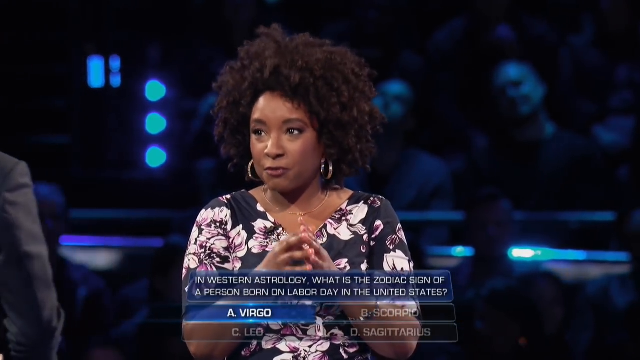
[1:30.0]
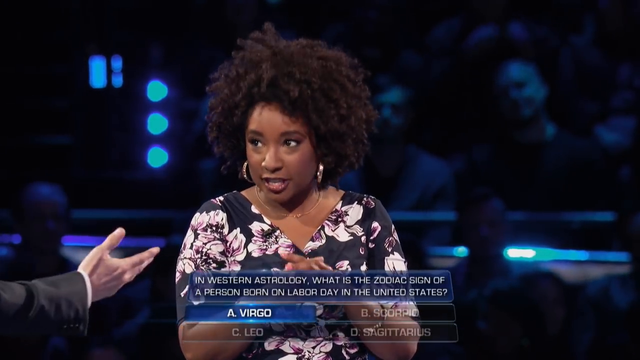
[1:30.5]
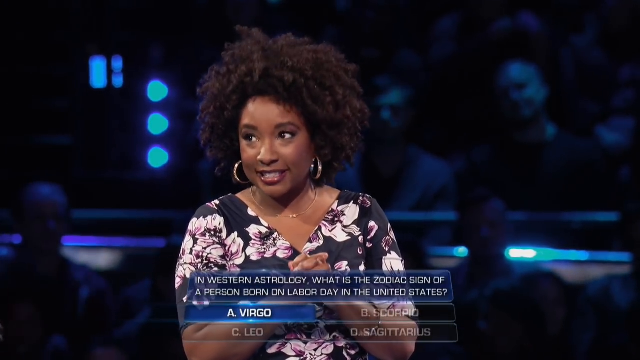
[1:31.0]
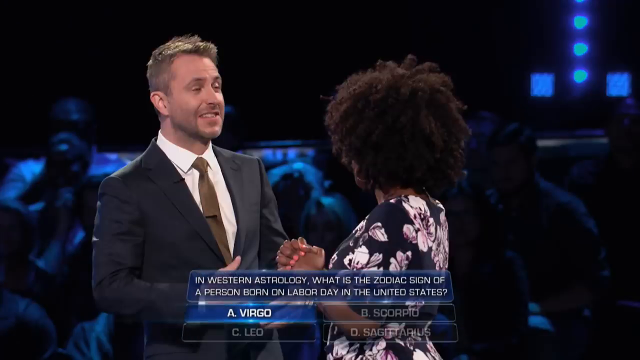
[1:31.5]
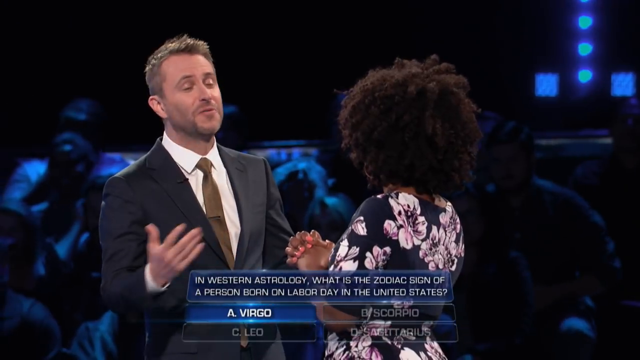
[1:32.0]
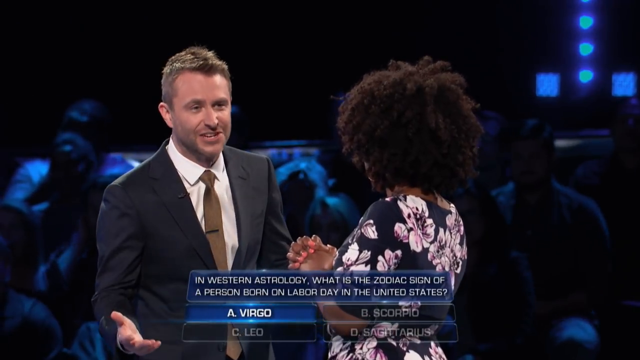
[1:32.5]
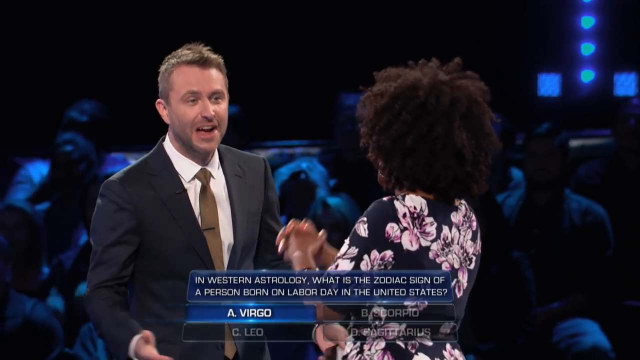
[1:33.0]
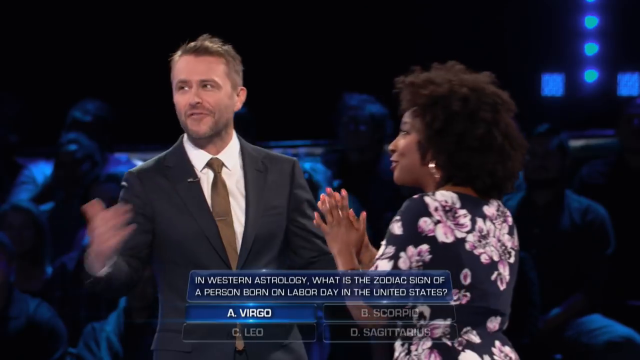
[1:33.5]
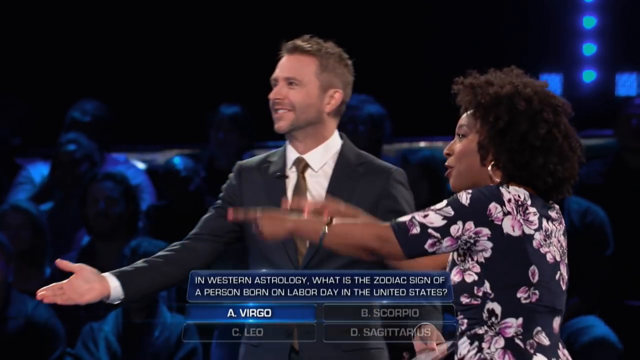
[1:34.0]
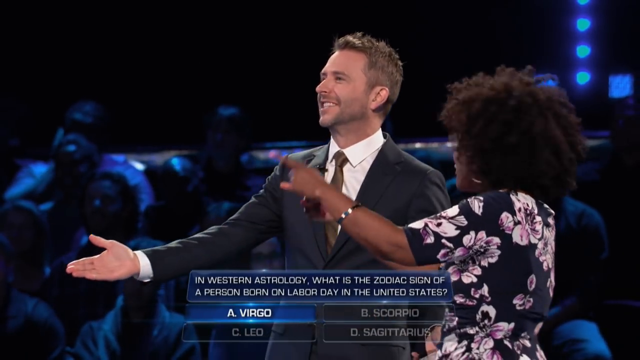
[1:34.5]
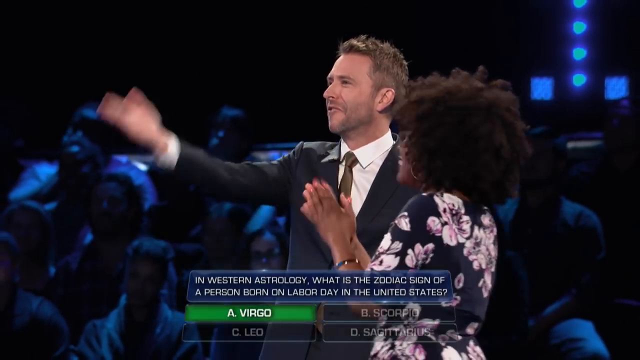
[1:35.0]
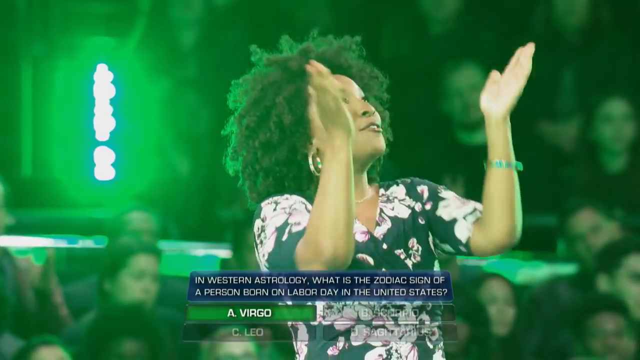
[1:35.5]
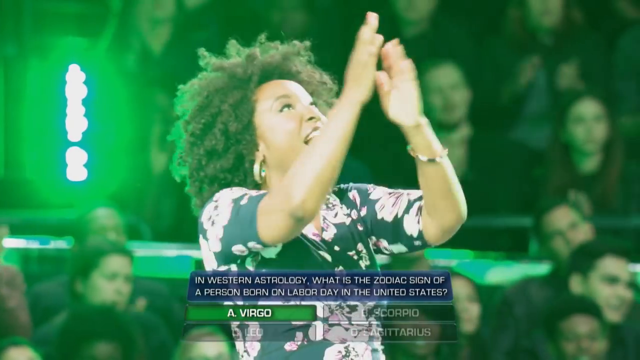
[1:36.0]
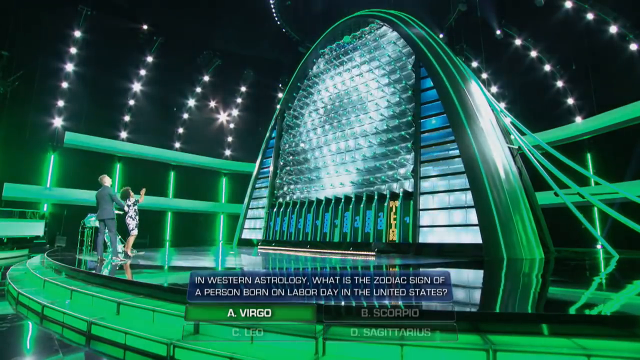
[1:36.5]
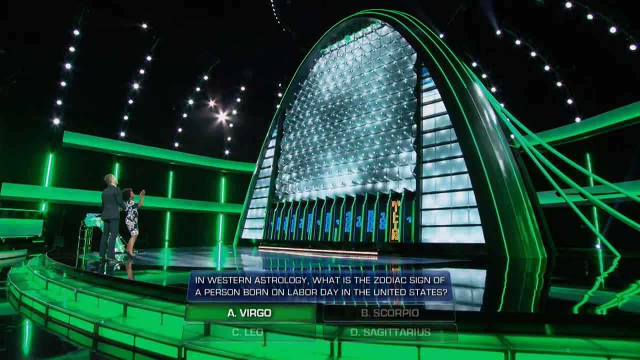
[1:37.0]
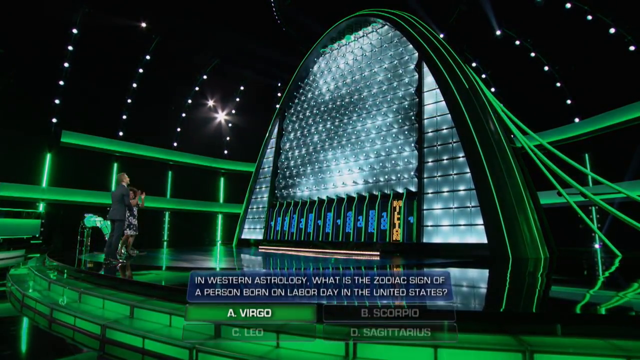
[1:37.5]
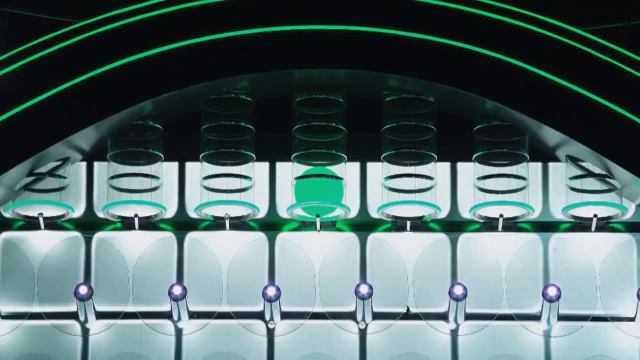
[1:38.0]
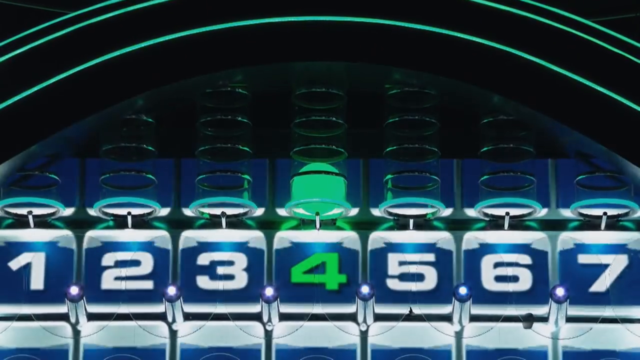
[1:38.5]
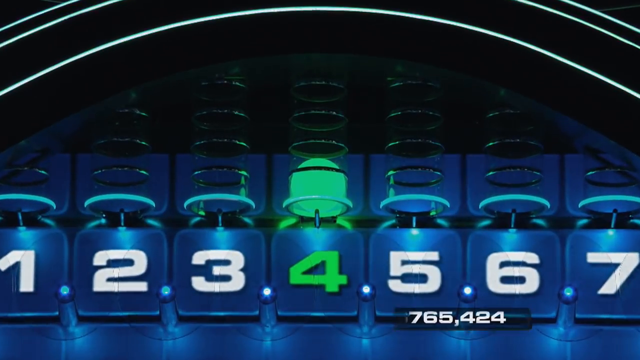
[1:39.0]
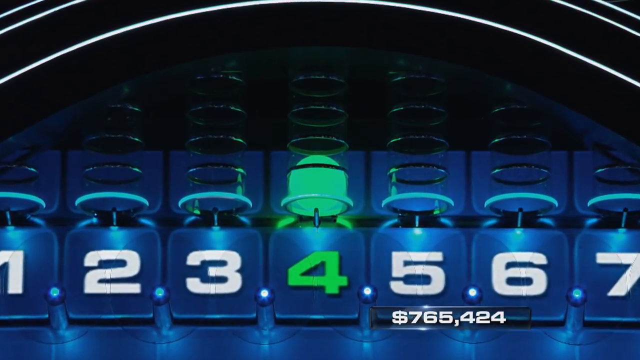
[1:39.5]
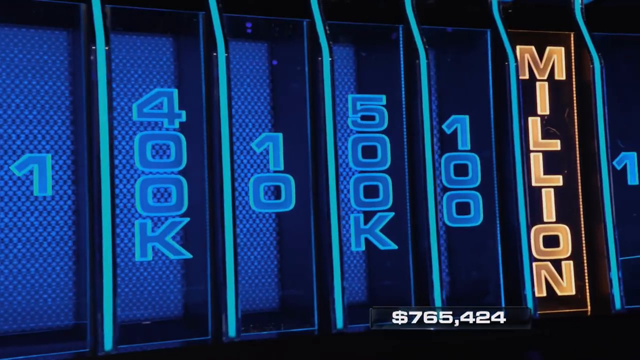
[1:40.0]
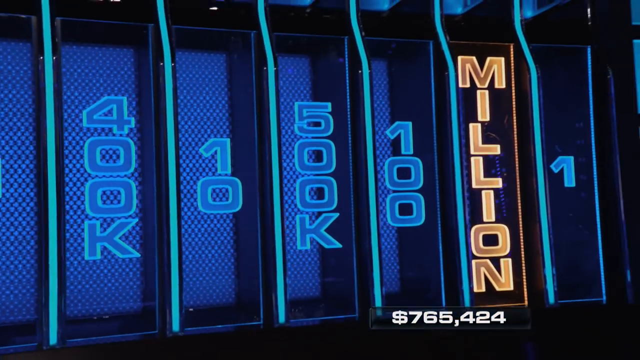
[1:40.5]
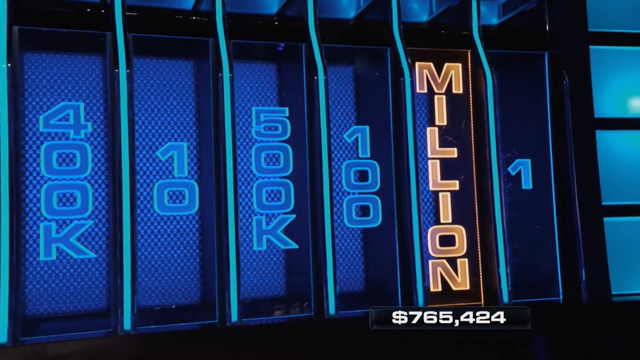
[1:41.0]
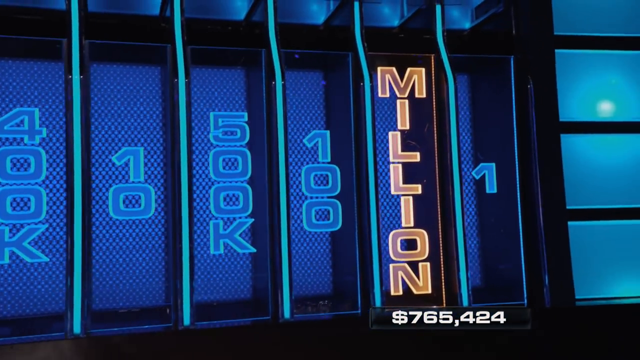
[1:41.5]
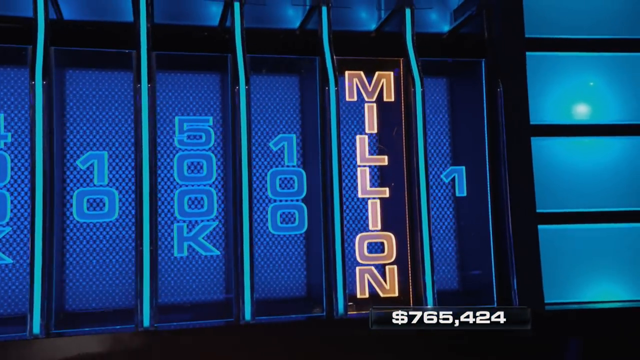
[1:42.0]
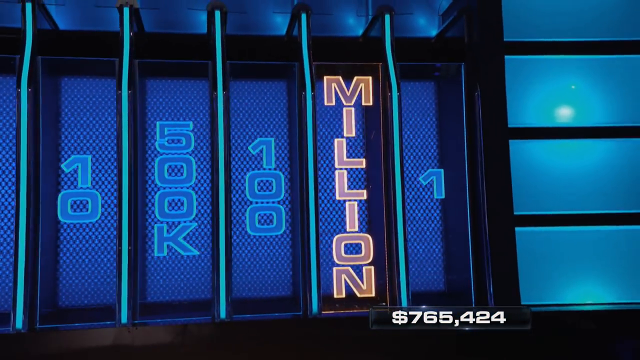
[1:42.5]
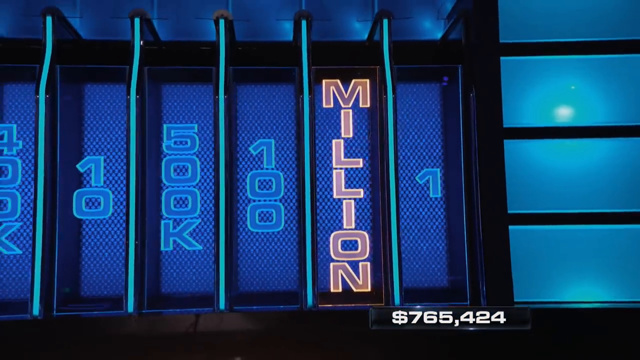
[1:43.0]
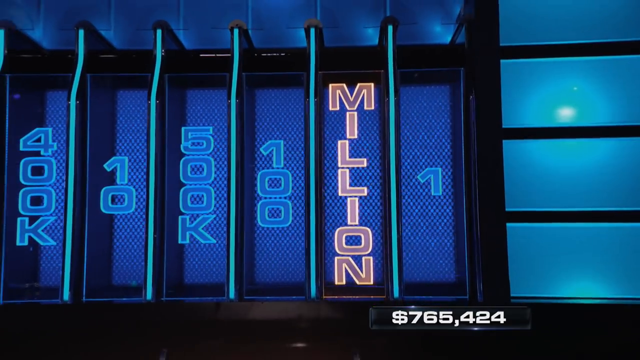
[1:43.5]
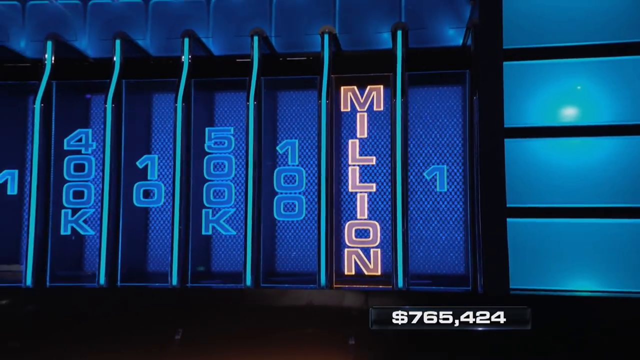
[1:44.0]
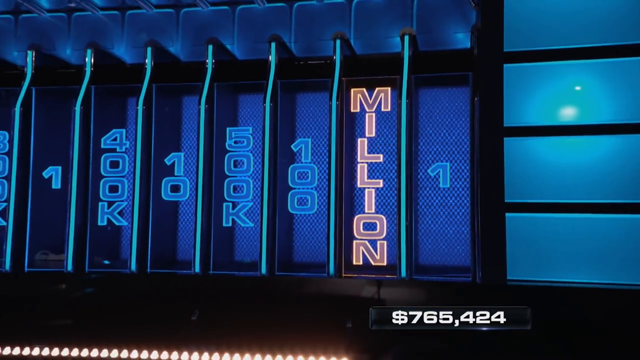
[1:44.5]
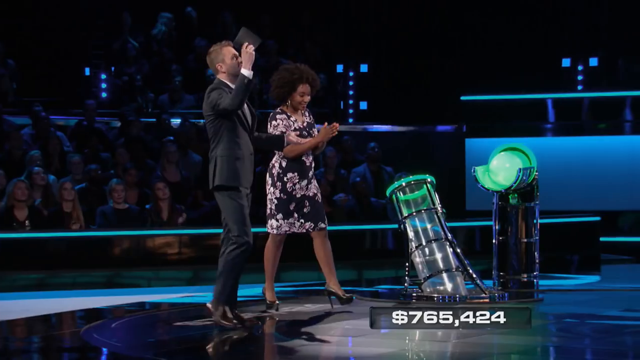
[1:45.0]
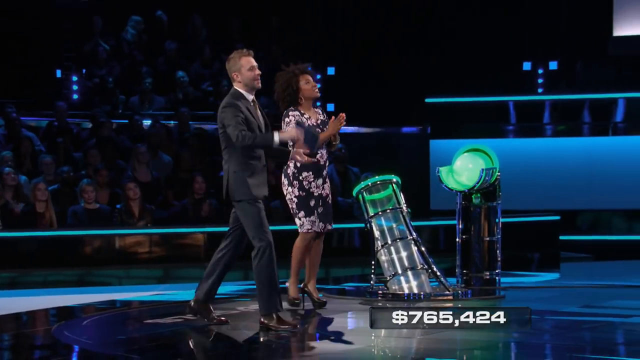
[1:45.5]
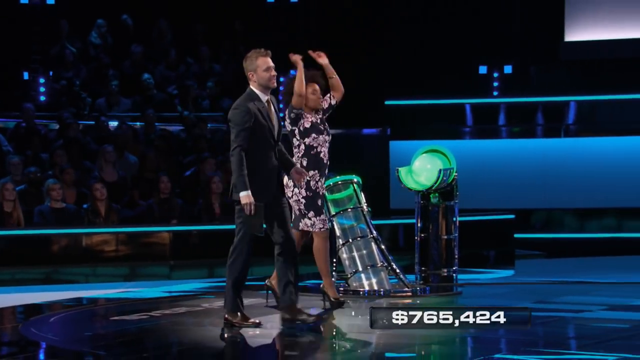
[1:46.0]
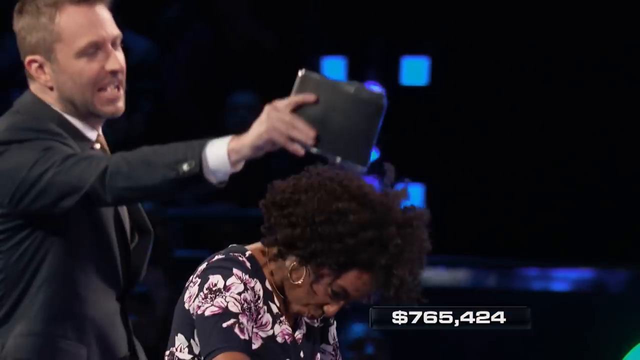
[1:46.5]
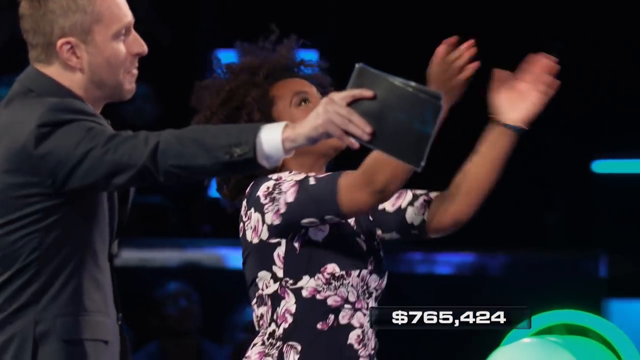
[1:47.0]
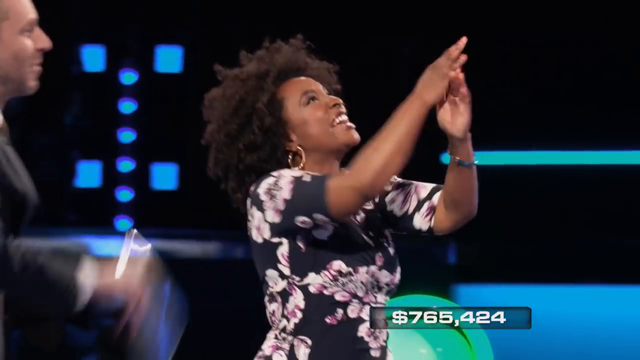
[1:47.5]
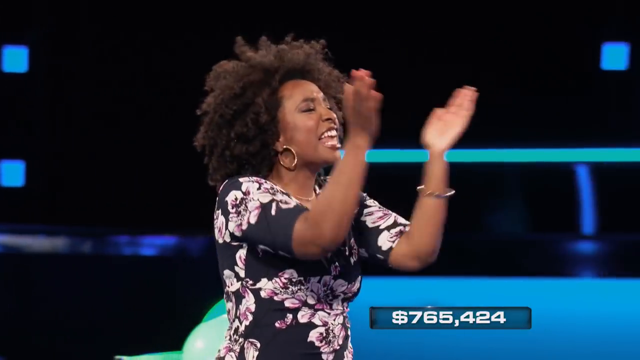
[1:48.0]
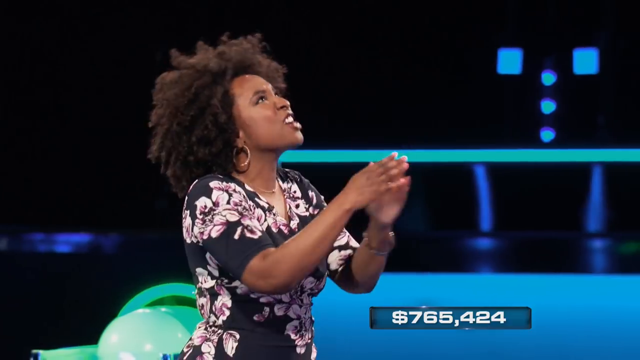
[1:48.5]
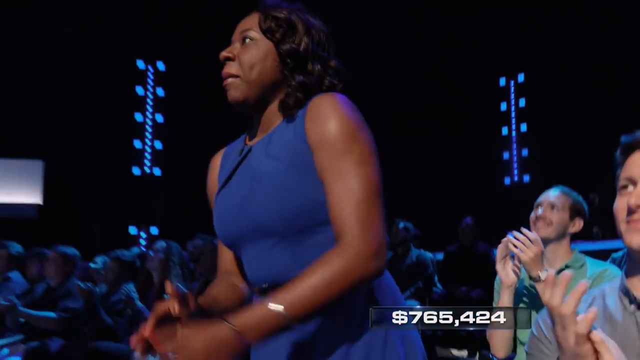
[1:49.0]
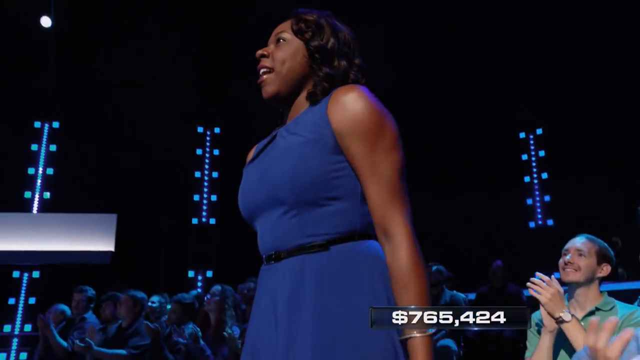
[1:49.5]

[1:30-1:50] The woman in the flower dress talks to the talk show or game show host, and the host makes an upward gesture as if showing her the giant screen in front of them. Both of them are in front of the giant screen, and the woman in the flower dress claps. The screen shows the numbers 1 to 7, and the number 4, where the white ball fell, lights up and turns green. Signs with different dollar amounts appear, such as 10, 500k, 100, million and 1, with the million lit up. They both walk toward the screen as the woman in the flower dress claps and walks forward. A woman in the audience in a blue dress stands up. The numbers one to seven appear again with the 4 lit up in green. The woman in the flower dress continues to talk to the game show host, who gestures toward the screen again, and the lighting on the set turns green as the woman claps enthusiastically. The blue screen in front of them is shown again.